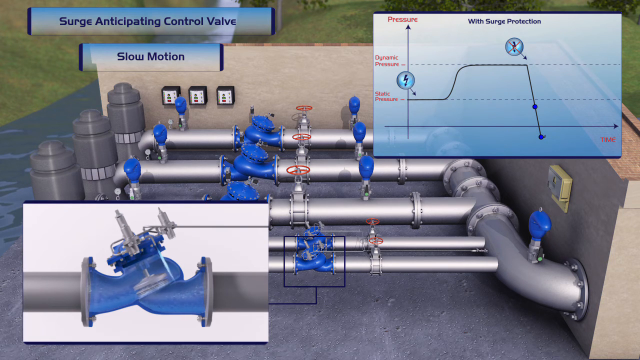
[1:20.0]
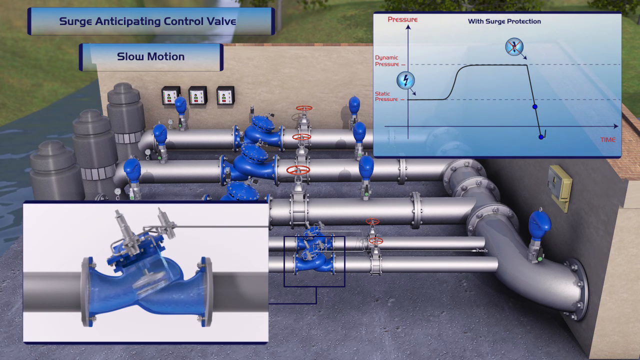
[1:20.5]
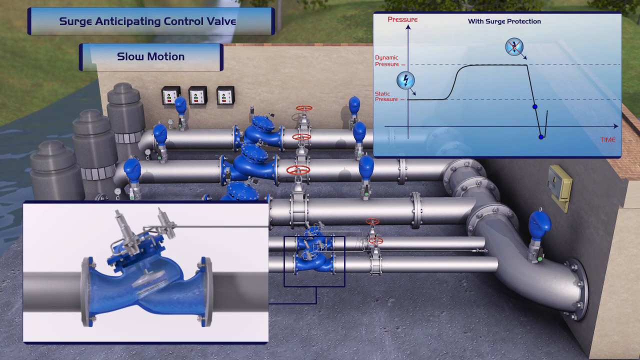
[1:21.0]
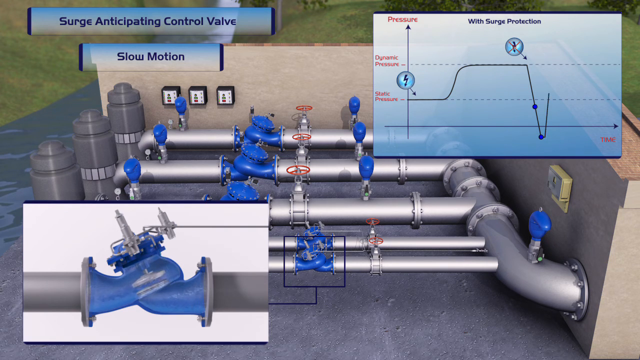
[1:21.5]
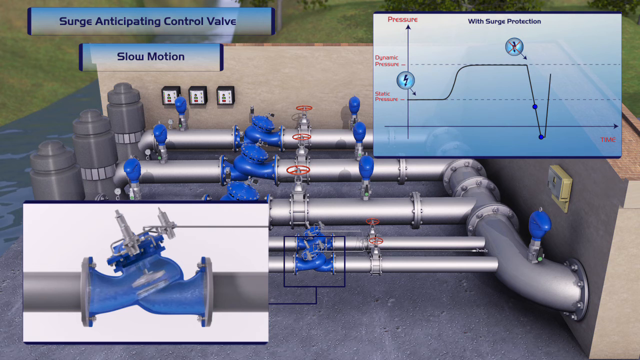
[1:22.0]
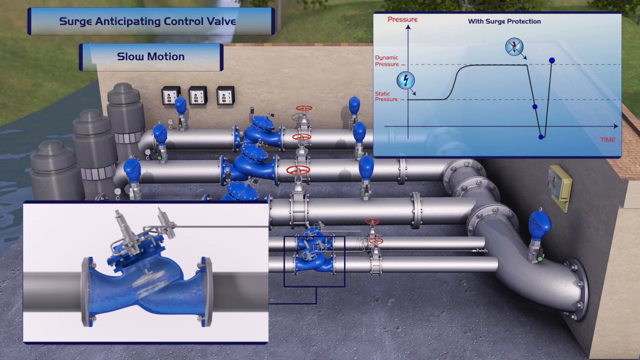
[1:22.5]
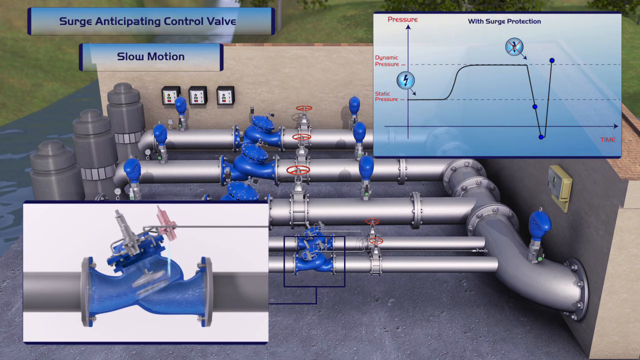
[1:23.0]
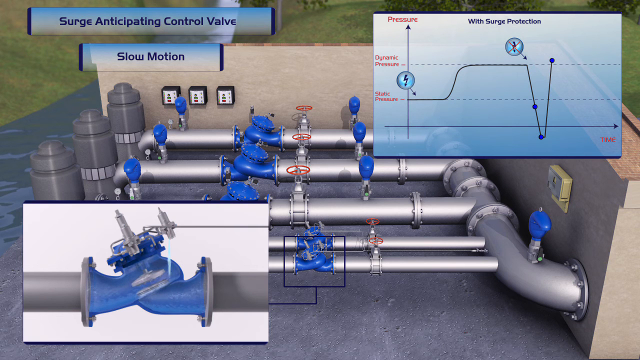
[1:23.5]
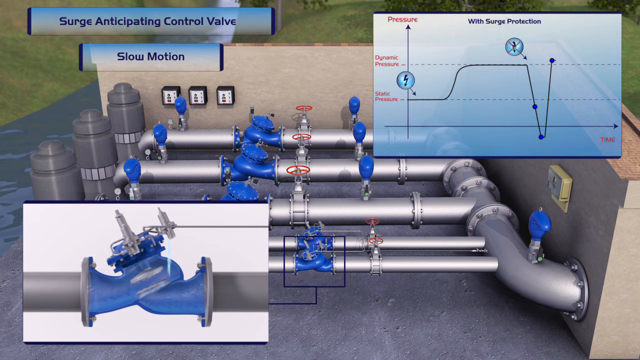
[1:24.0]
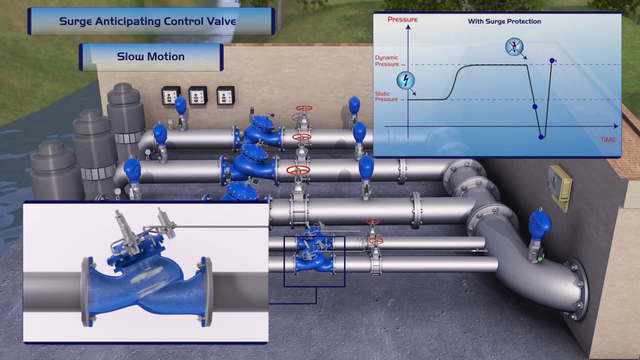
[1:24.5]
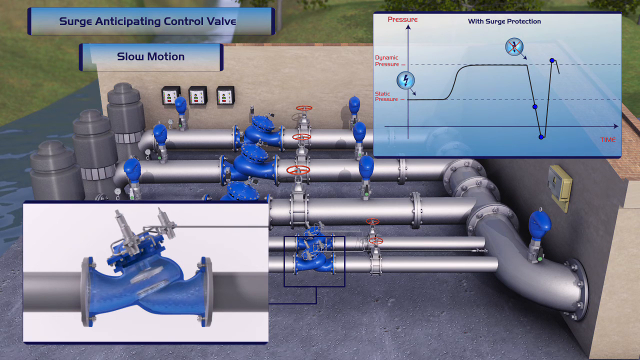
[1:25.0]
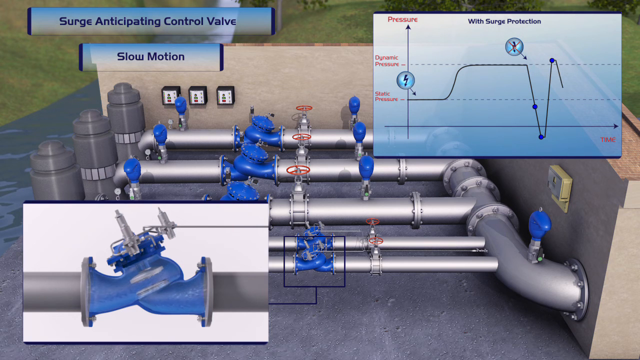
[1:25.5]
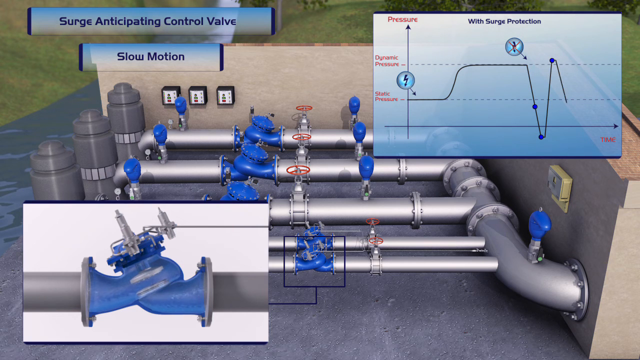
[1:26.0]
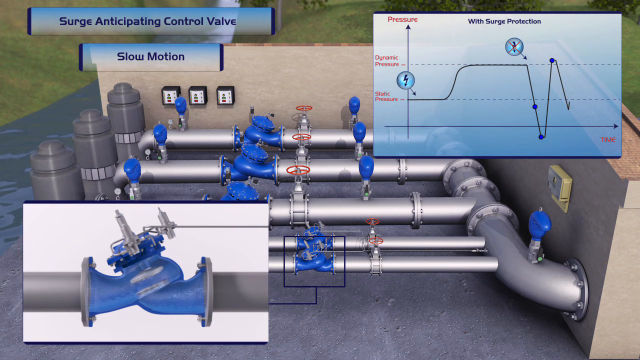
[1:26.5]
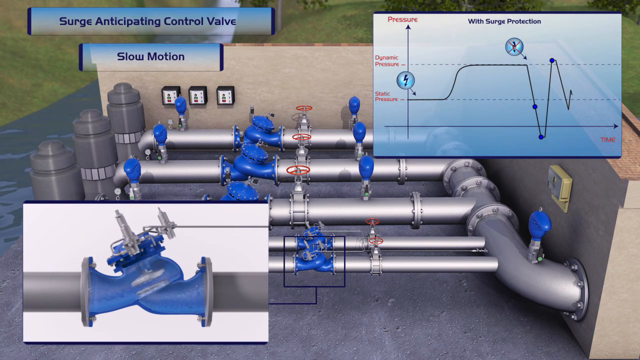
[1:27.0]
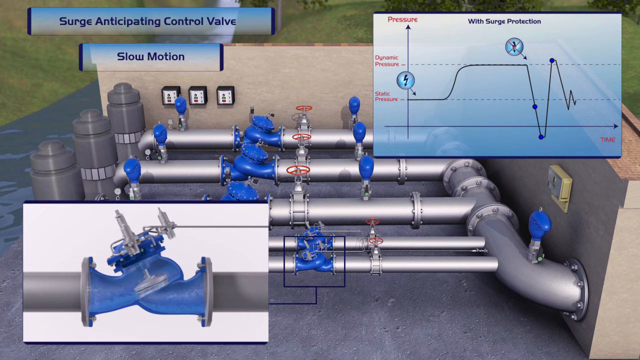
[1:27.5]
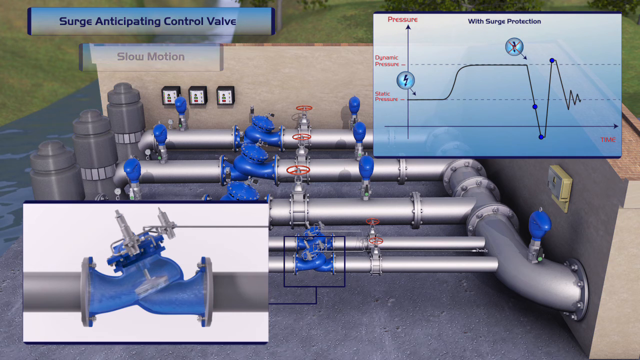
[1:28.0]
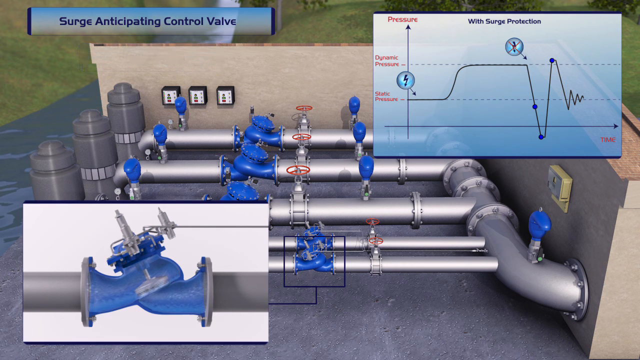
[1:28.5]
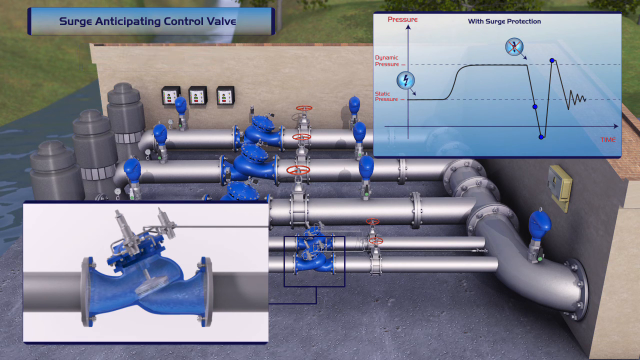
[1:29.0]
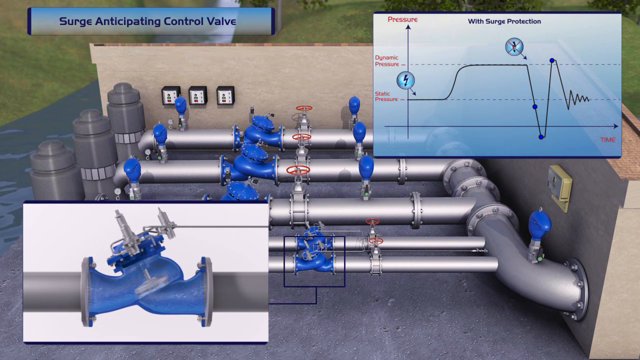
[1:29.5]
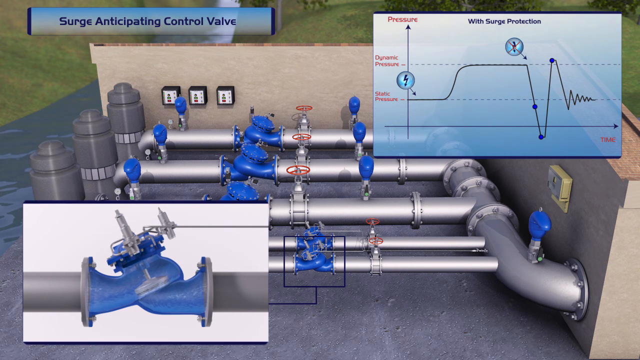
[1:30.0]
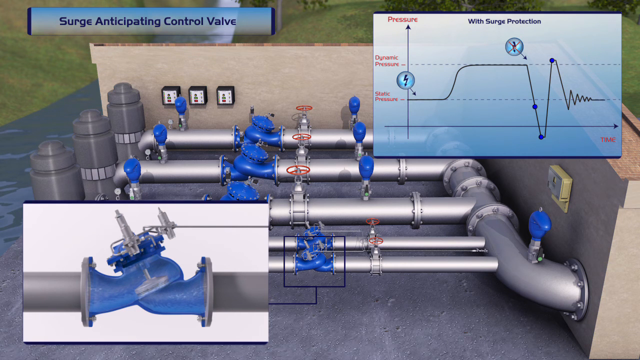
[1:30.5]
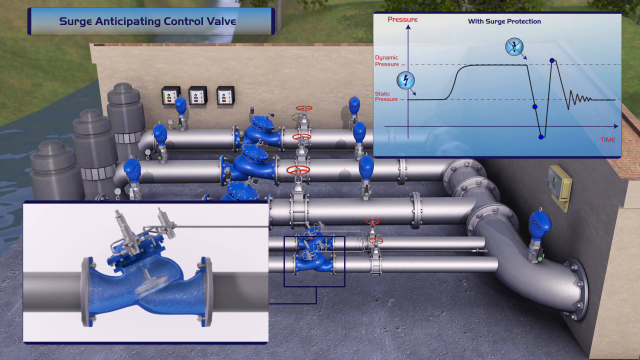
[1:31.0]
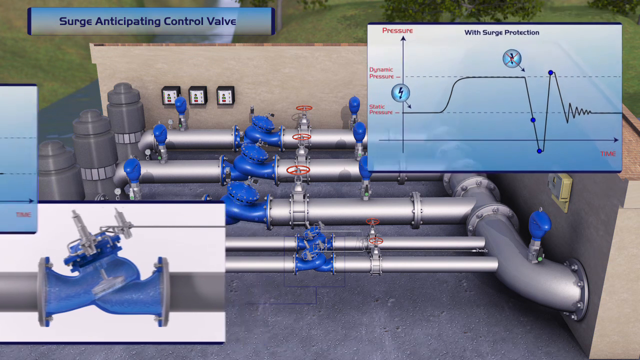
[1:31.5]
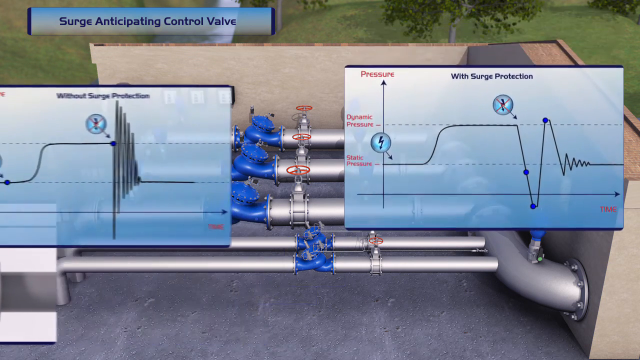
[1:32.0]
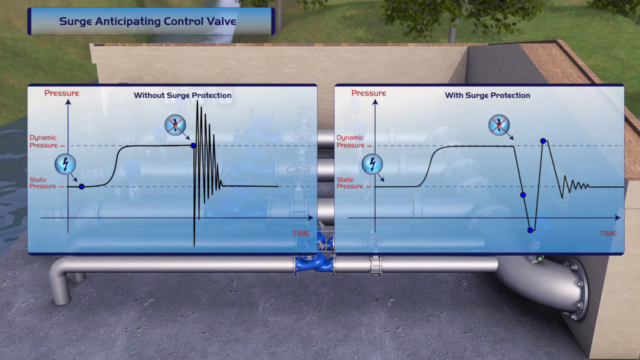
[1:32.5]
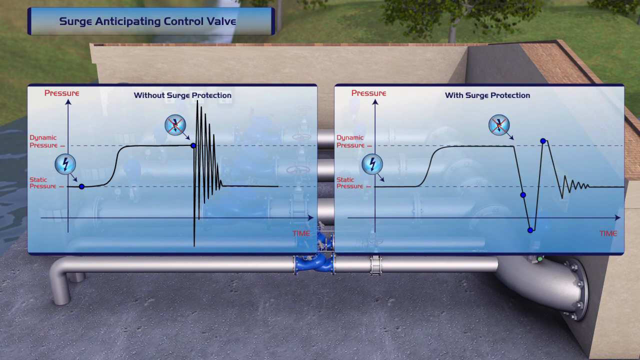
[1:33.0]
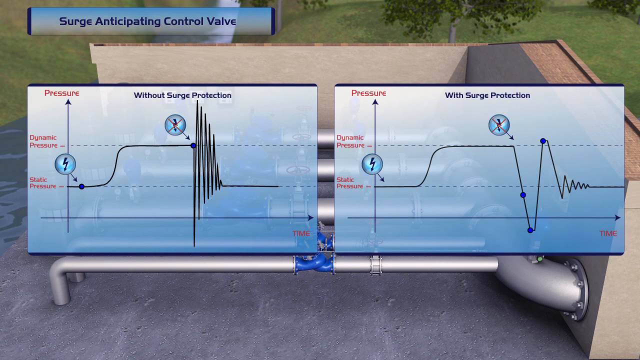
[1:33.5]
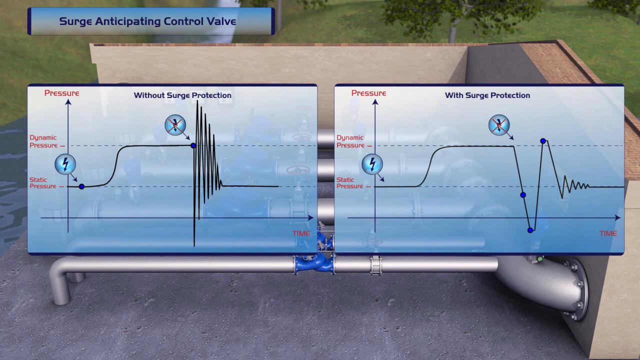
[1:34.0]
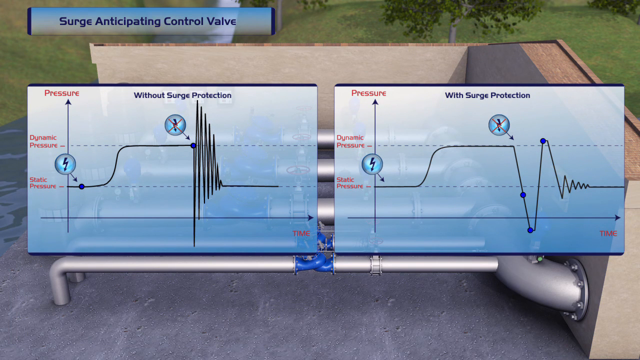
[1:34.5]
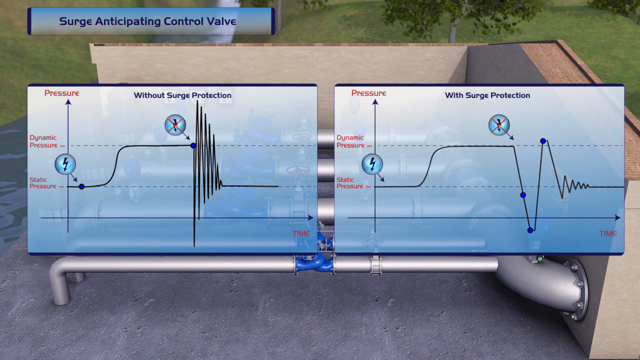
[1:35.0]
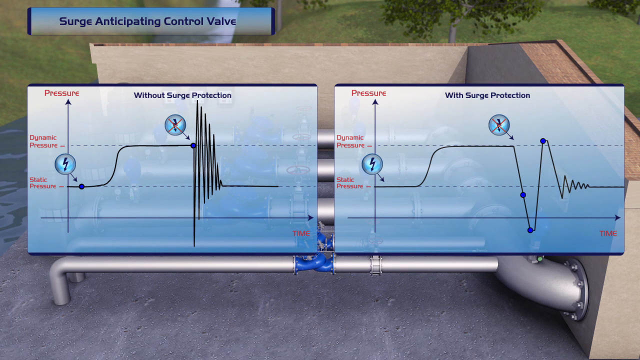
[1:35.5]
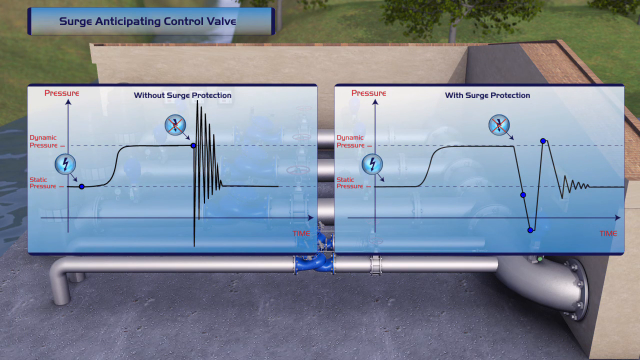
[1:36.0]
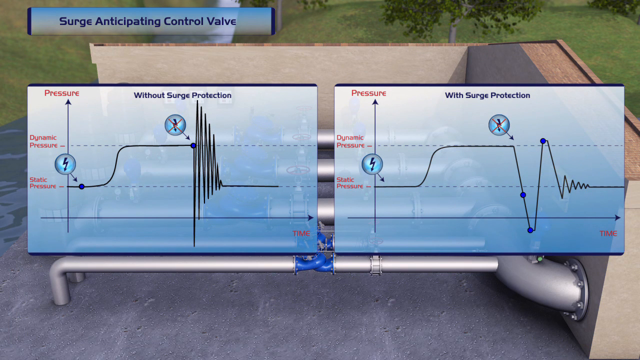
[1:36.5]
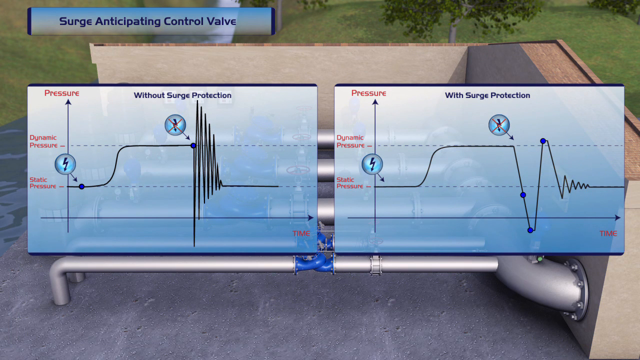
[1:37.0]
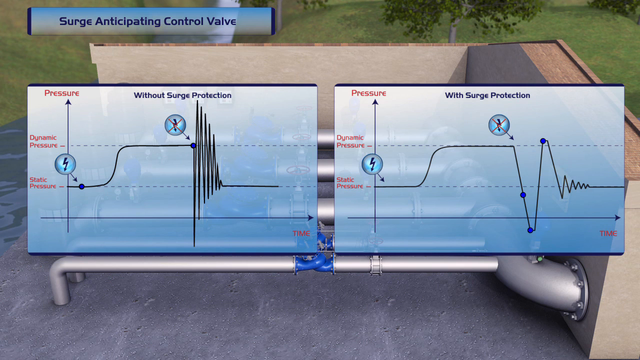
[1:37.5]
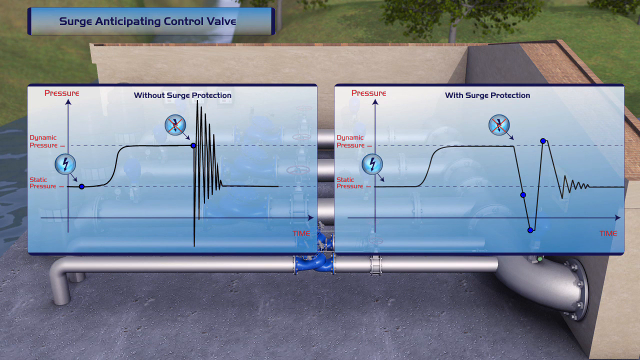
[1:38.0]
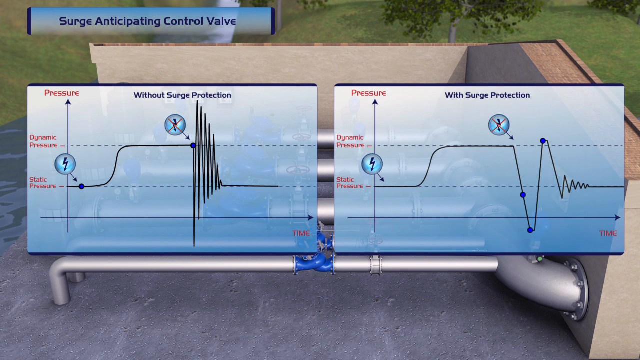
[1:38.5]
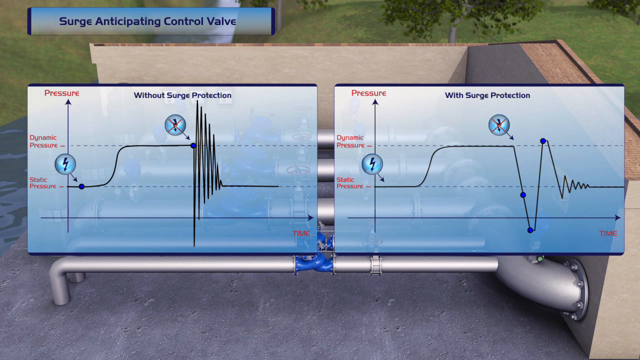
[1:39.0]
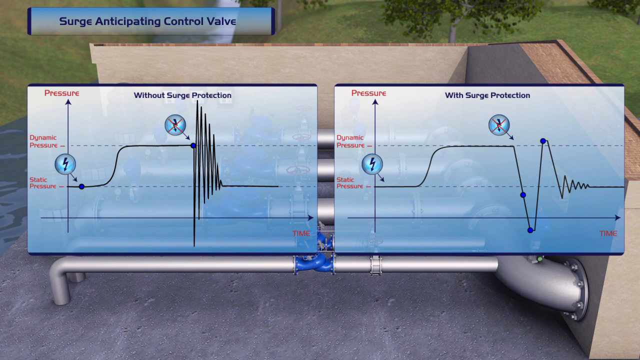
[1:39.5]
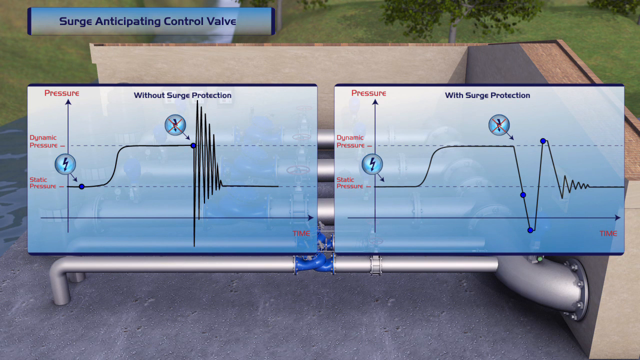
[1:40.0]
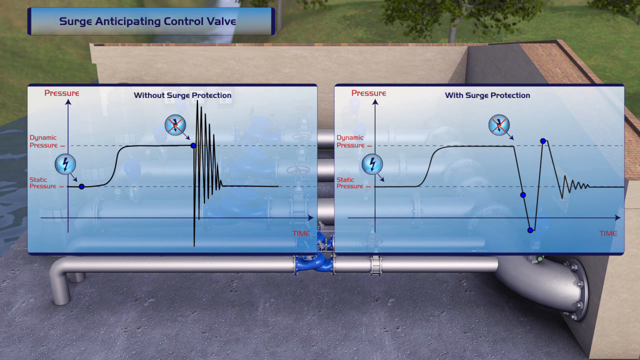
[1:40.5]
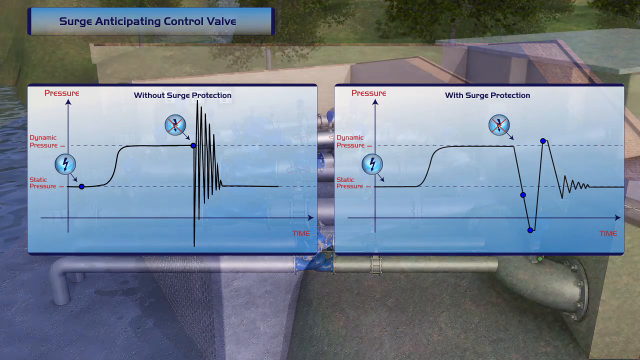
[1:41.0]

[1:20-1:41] The front of the system of pipes on the bank of a body of water is shown. In the upper left corner it says "surge anticipating control valve", and underneath, a blue banner says "slow motion". A bar graph in the upper right corner is titled "with surge protection", and in the bottom left corner is a close-up of one of the valves on a front pipe. The line, which had dropped below the solid line on the bar graph, shoots upward through static pressure toward dynamic pressure. It hits just above dynamic pressure and a small blue dot appears. It travels horizontally for just a beat, then turns vertically and moves back down toward the static pressure line, crosses below it, moves back up past it, and goes up and down several more times, getting smaller and smaller until it becomes a solid line on static pressure. Another bar graph moves into the frame. On the left-hand side is the line graph that says "without surge protection": its line runs horizontally on static pressure, goes up to dynamic pressure, stays there past the center, and then does a very wide zigzag, getting smaller and smaller, before stopping horizontally on static pressure. The line graph on the right says "with surge protection": its line runs on static pressure, moves up to dynamic pressure a little later than the first, continues right, then drops all the way below the solid line at the very bottom of the graph and goes right back up to just above dynamic pressure. It comes down slightly past static pressure and zigzags about five times until it rests on static pressure as a solid horizontal line.